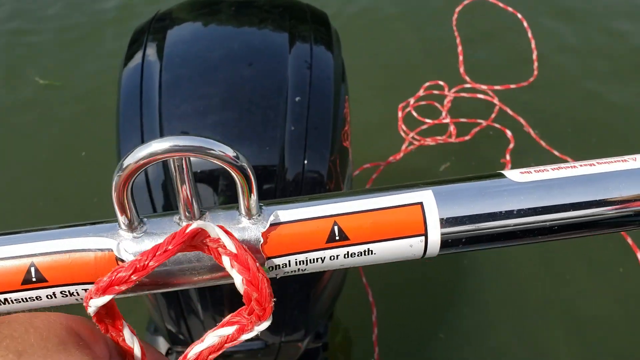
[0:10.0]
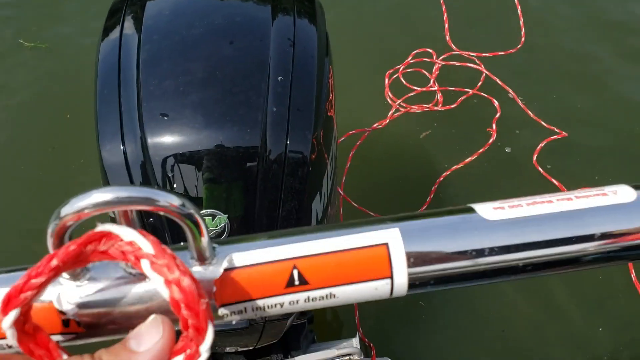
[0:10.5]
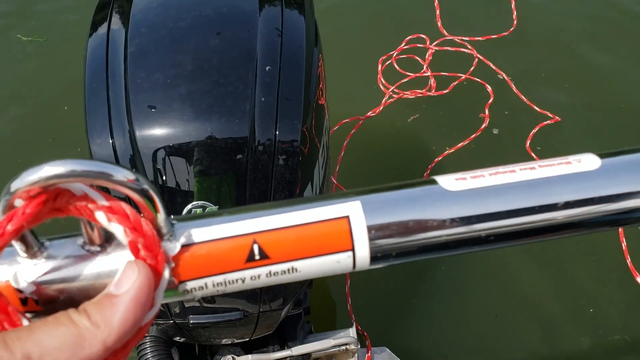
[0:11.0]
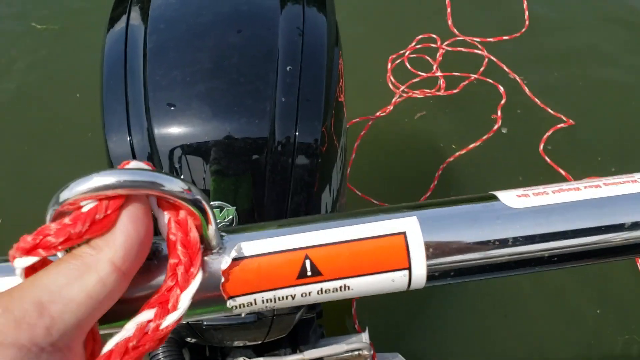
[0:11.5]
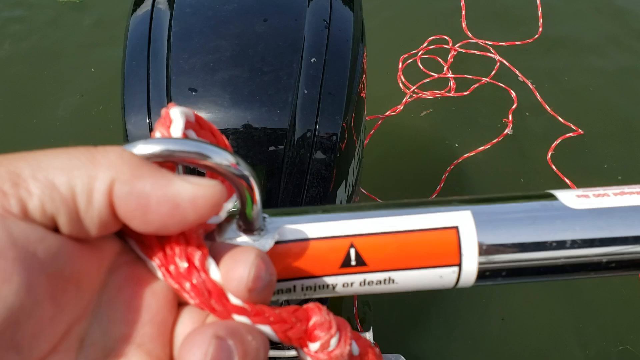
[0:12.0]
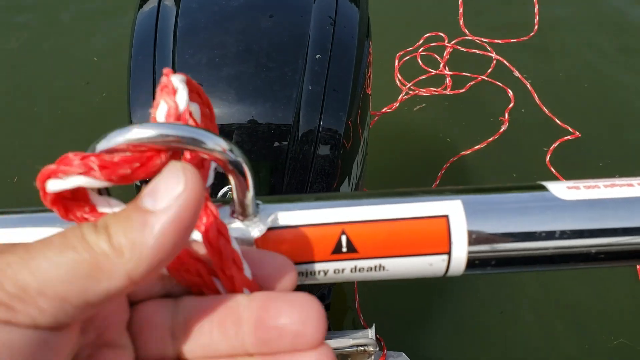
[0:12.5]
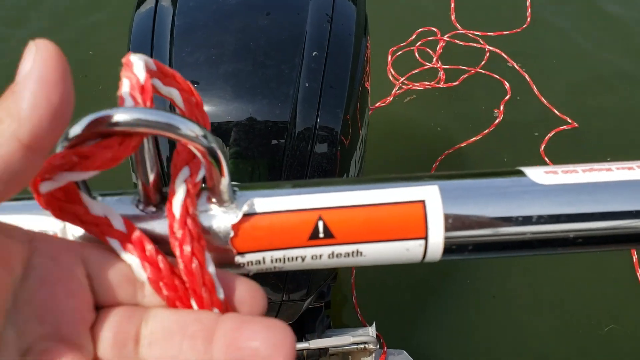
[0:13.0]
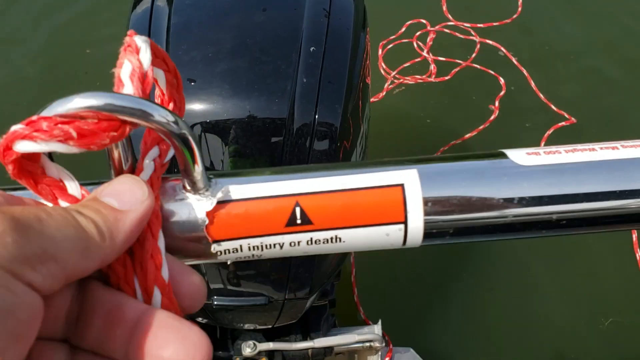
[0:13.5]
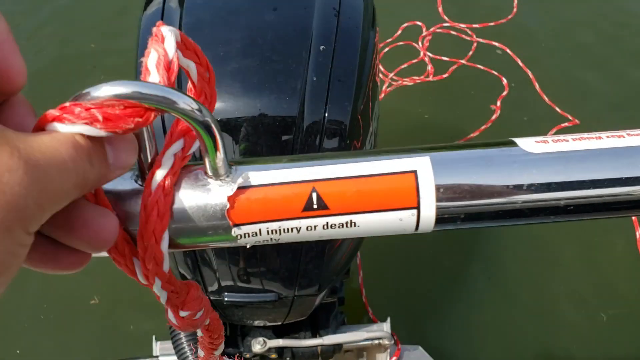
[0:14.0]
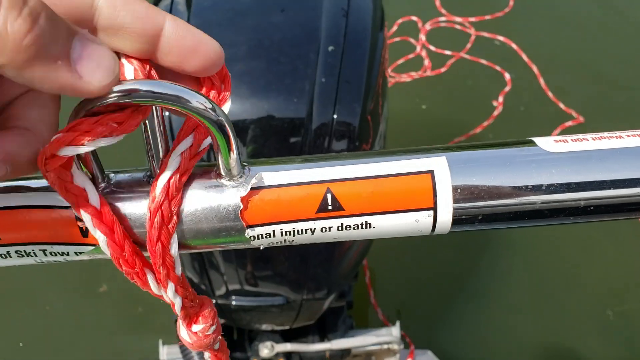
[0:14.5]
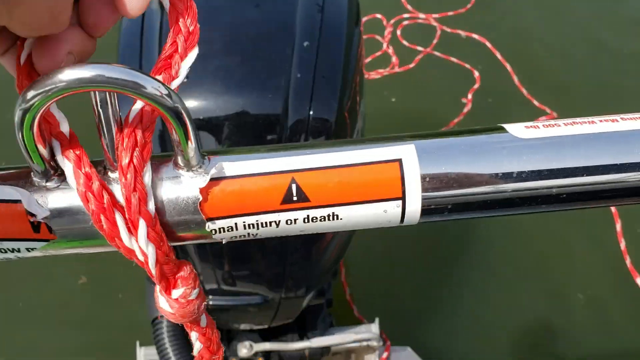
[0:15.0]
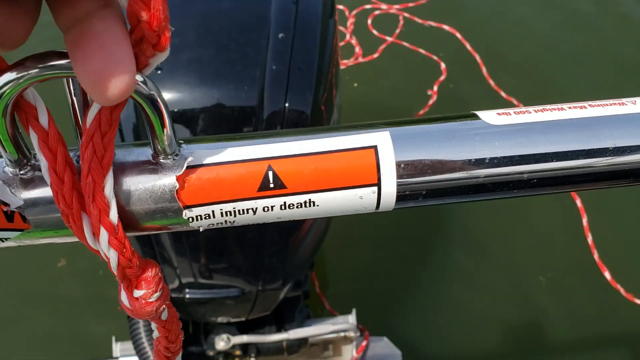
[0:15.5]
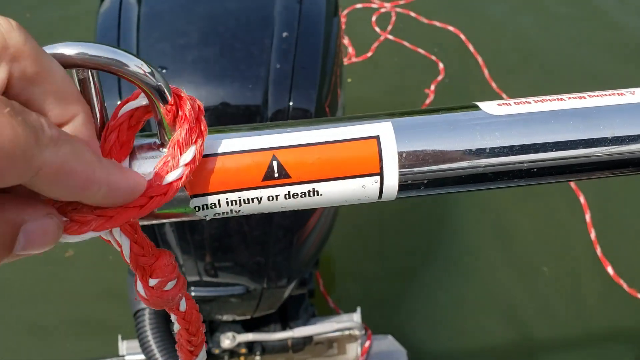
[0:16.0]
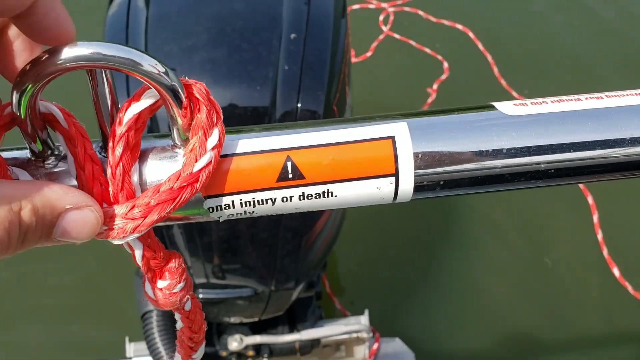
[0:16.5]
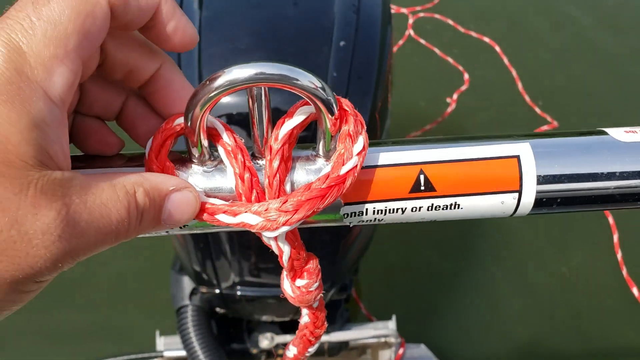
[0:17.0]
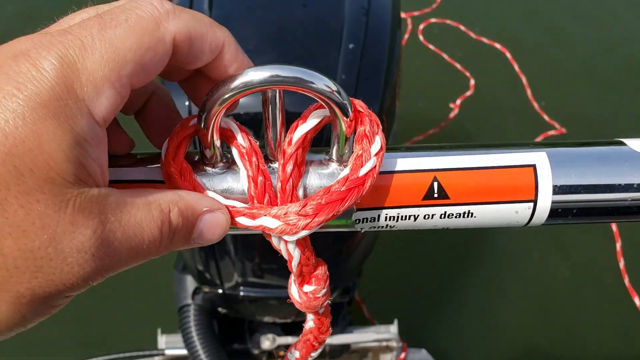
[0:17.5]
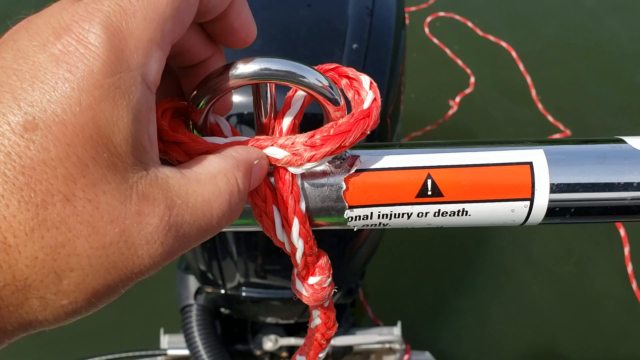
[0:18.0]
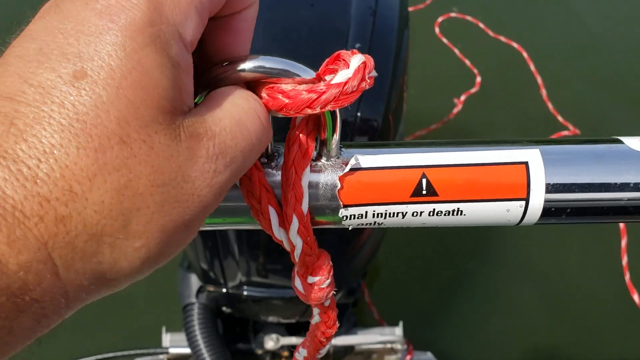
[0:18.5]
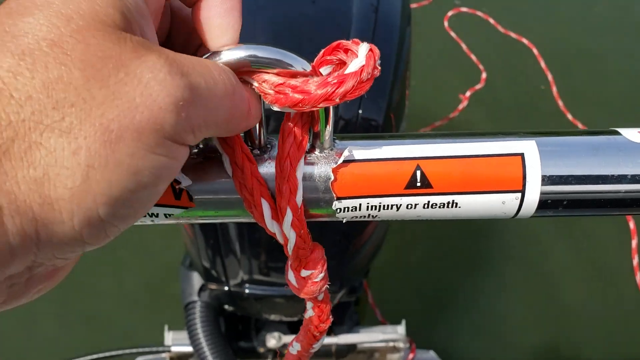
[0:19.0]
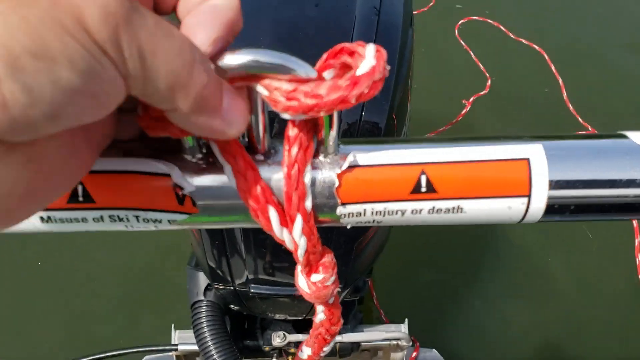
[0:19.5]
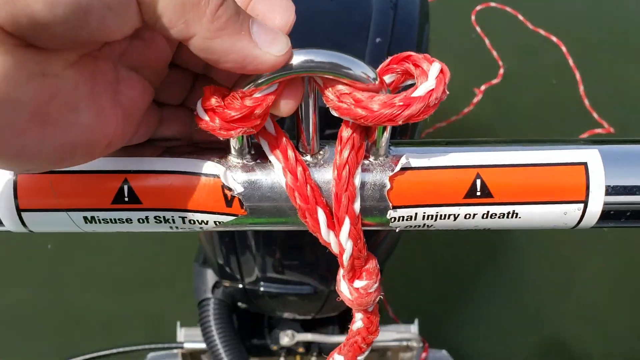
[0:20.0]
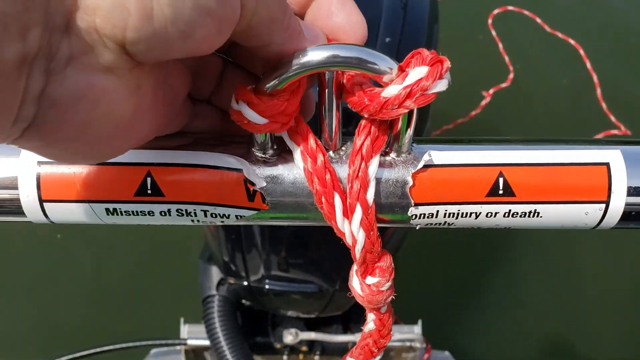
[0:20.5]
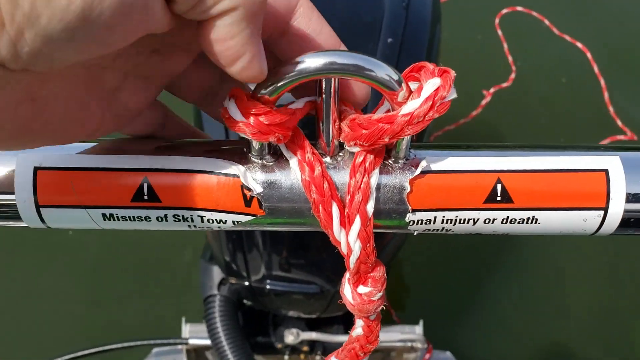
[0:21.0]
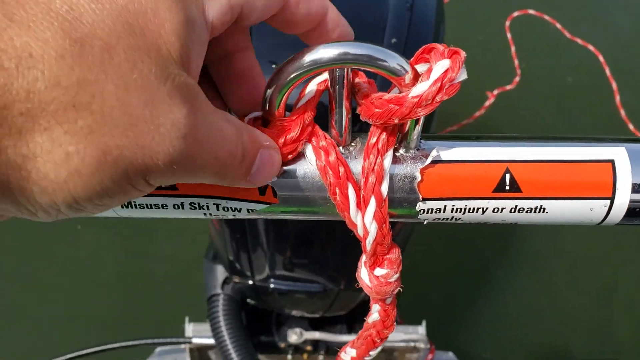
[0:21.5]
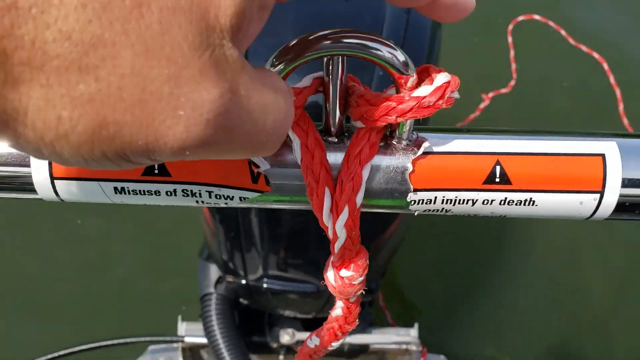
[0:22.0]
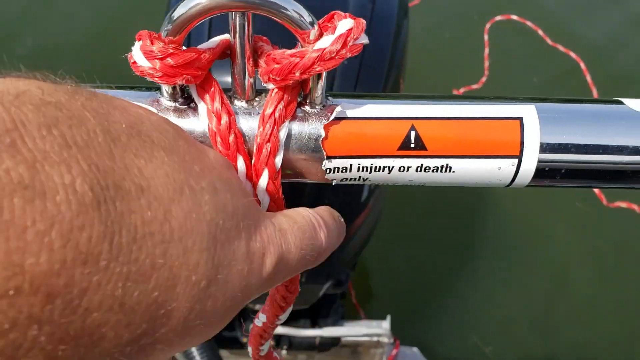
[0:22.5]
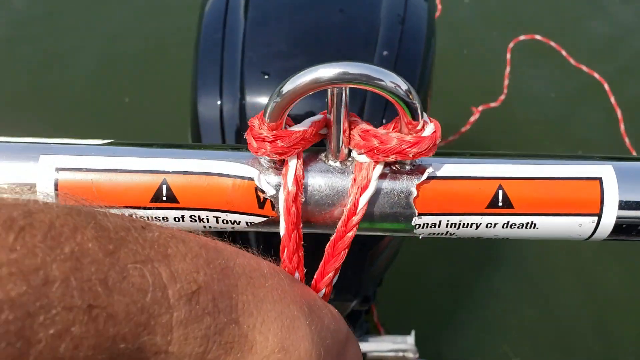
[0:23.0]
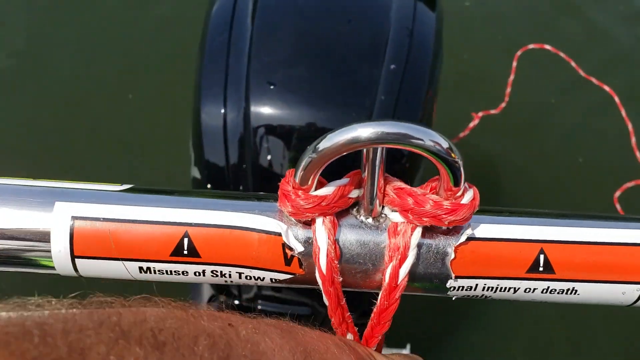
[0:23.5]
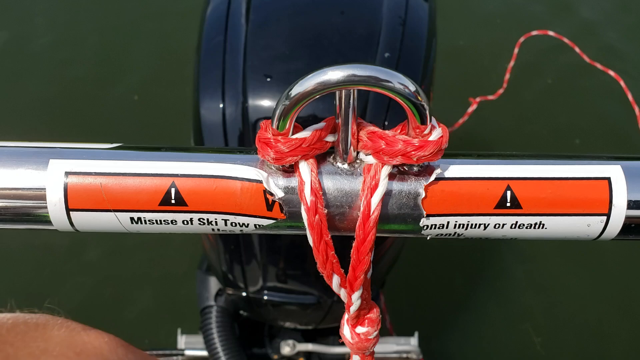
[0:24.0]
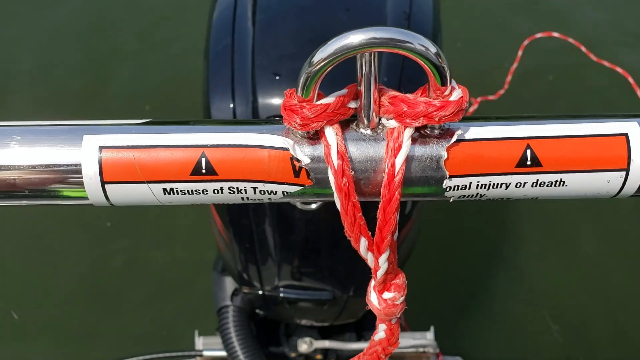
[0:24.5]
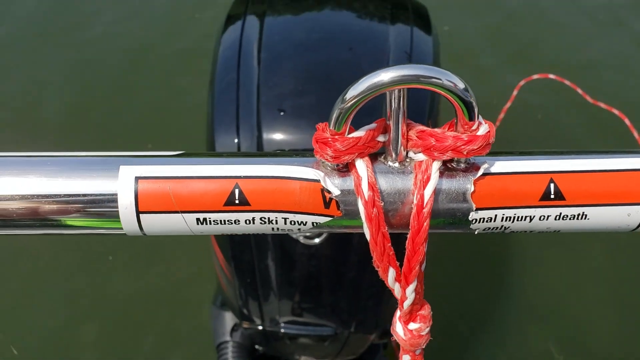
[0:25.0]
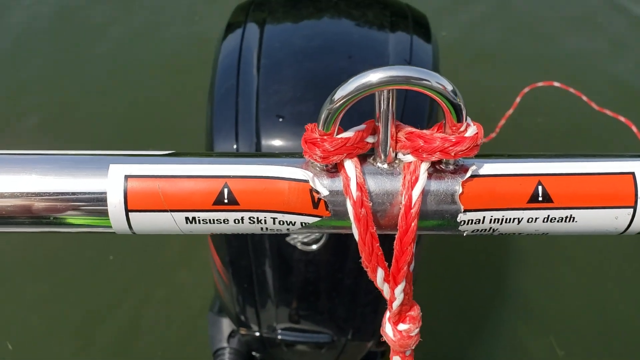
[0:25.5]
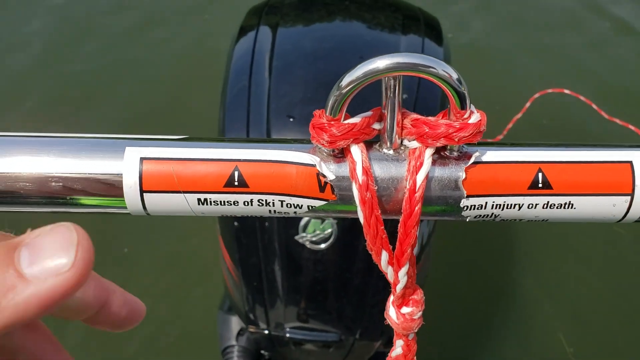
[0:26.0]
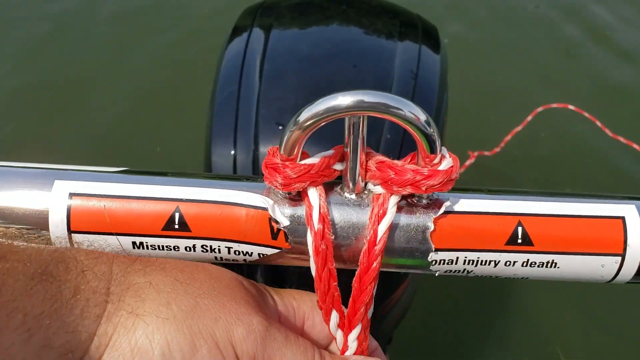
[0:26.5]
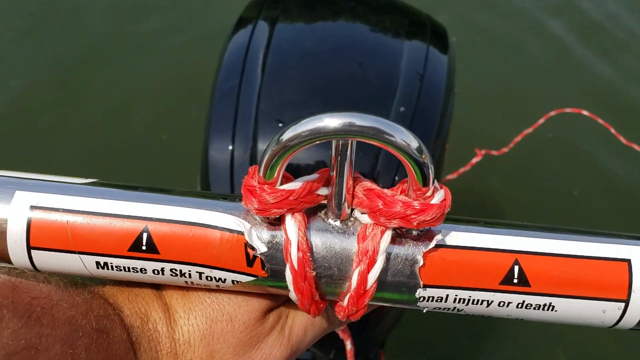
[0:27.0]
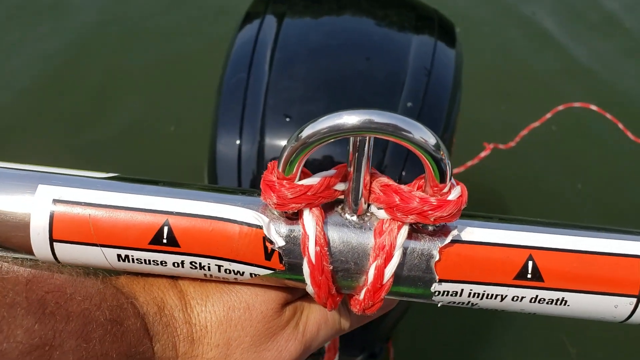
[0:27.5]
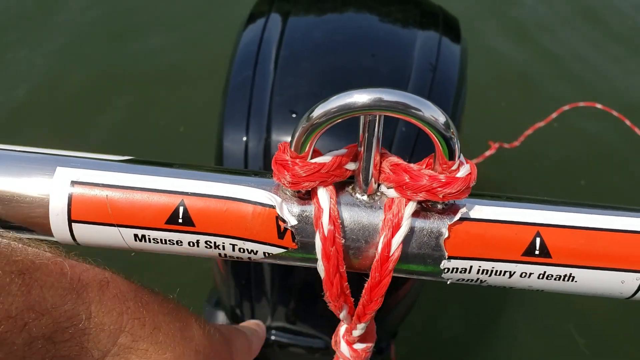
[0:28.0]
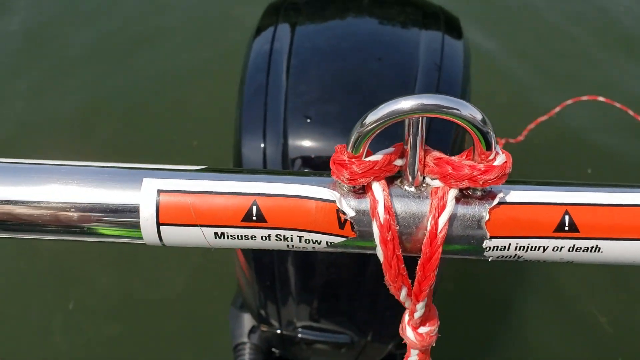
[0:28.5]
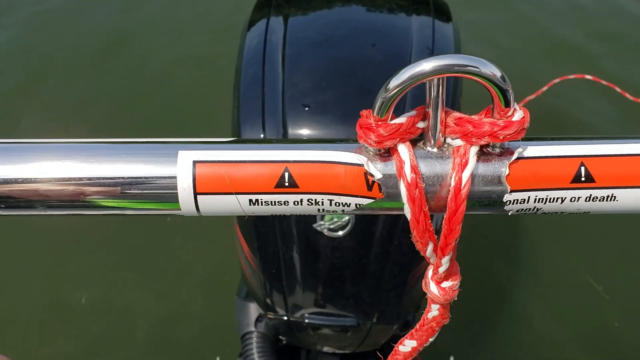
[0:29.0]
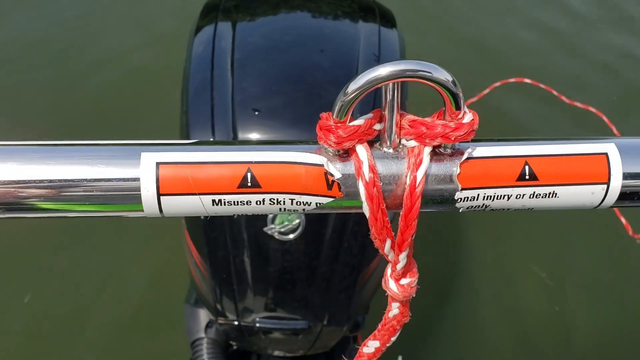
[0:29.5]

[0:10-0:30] A first-person view shows a man standing inside a motorboat, looking over the metallic railing. A torn caution sign on the railing is damaged and not readable, but it is a white sheet of paper with an orange header bar at the top bearing a black caution sign that looks like a black triangle with a white exclamation point inside it. The man holds a frayed red and white rope. A rope of the same sort, also red and white, is in the water behind the boat, curled up and twisted rather than straight. The black motor is directly underneath the metallic railing, and the water beneath the boat is kind of a dark greenish color. The man, whose hand is visible, puts the rope into a little loop on the railing and ties loops around the edges, attaching the motorboat to the rope in the water.